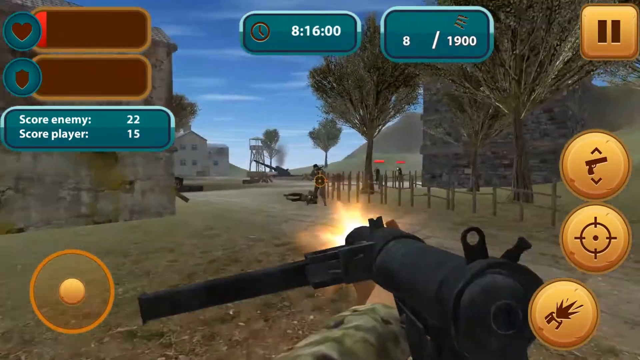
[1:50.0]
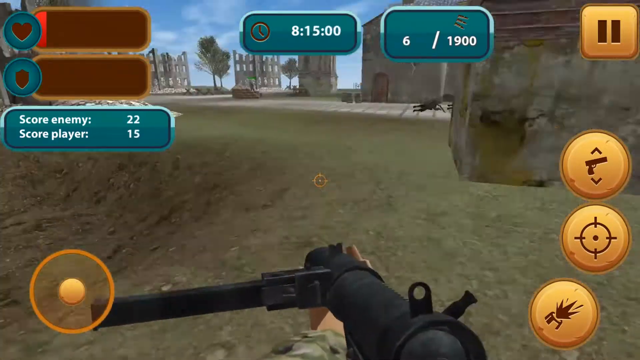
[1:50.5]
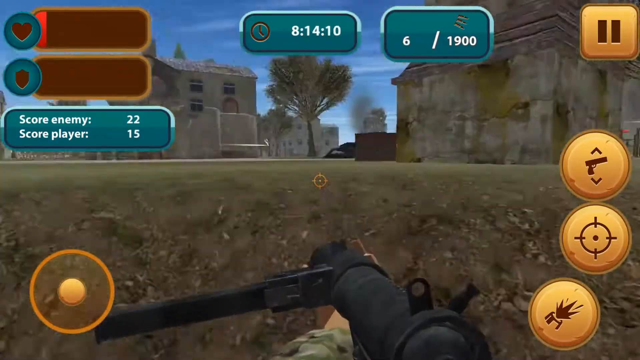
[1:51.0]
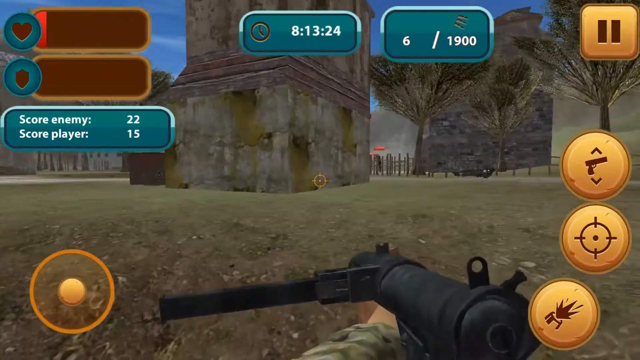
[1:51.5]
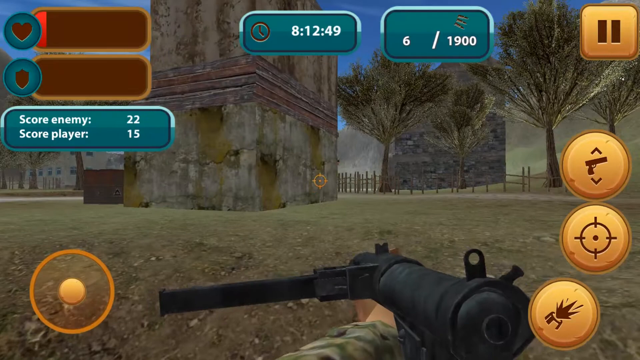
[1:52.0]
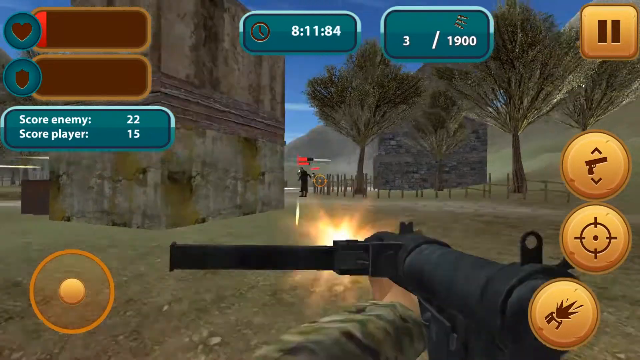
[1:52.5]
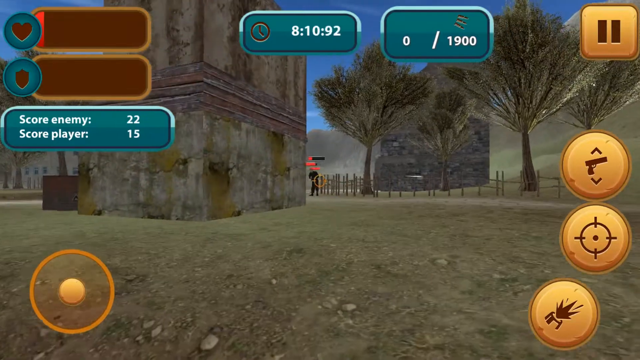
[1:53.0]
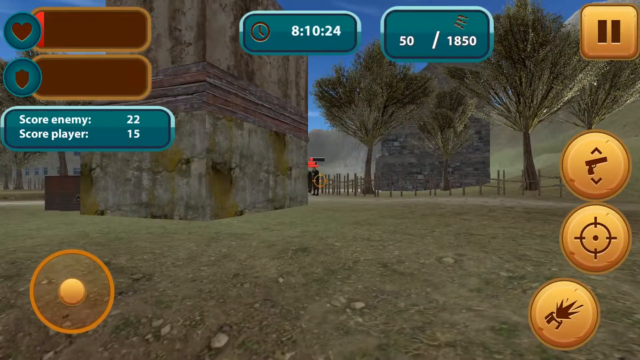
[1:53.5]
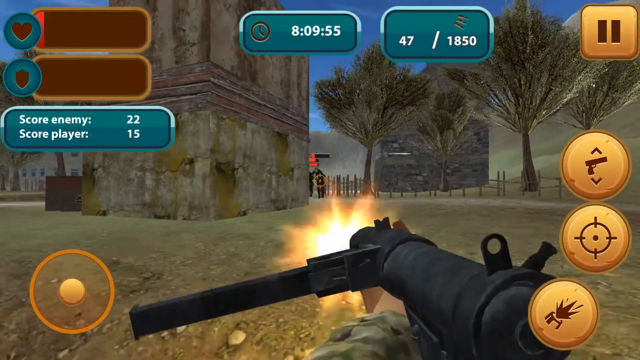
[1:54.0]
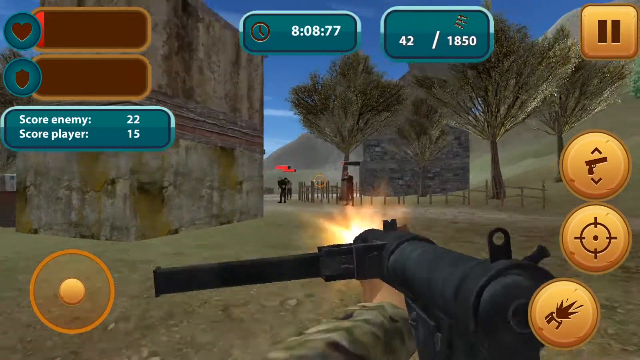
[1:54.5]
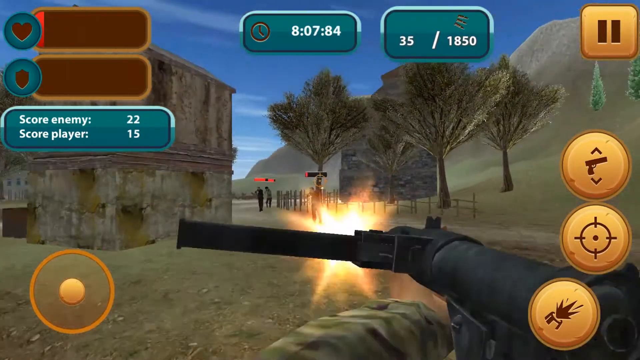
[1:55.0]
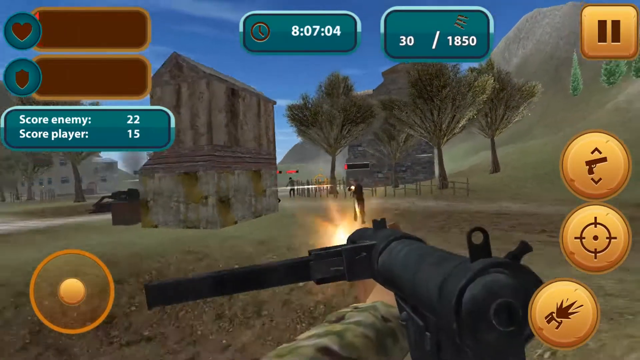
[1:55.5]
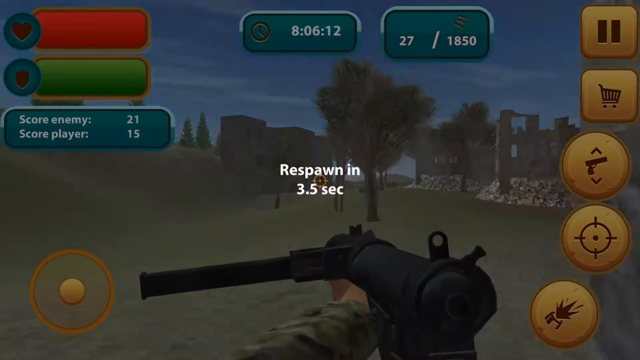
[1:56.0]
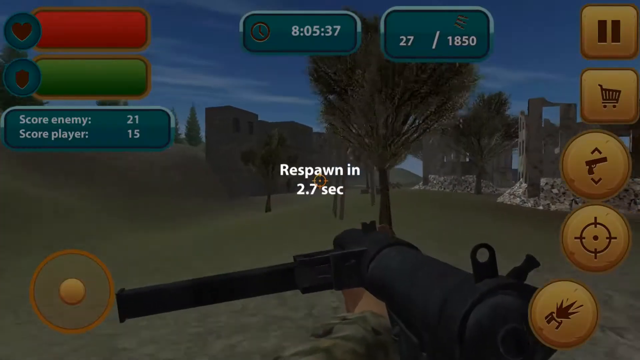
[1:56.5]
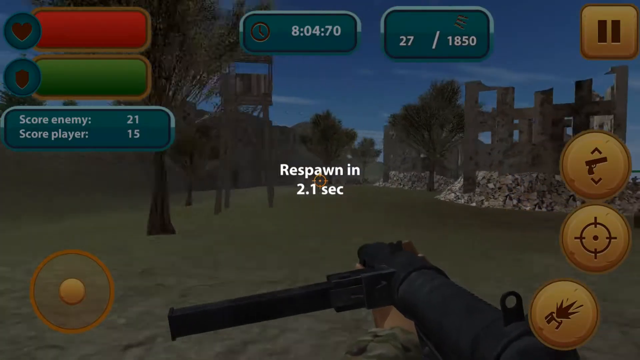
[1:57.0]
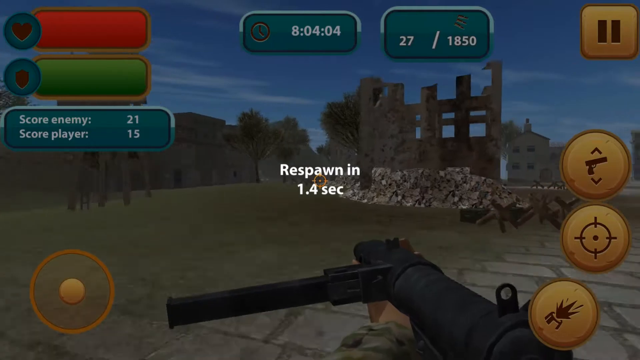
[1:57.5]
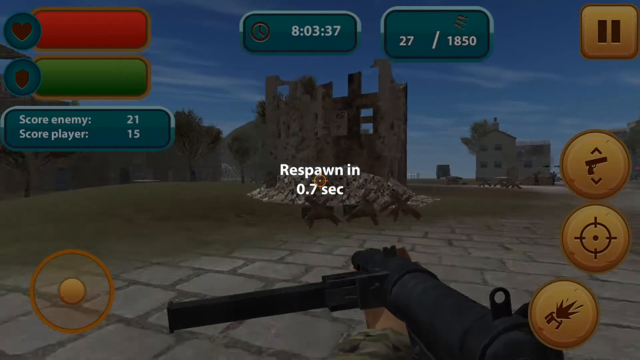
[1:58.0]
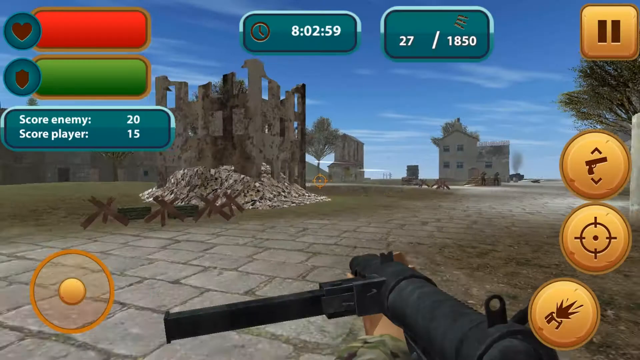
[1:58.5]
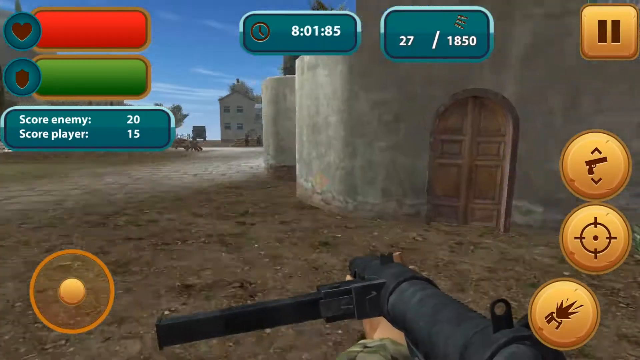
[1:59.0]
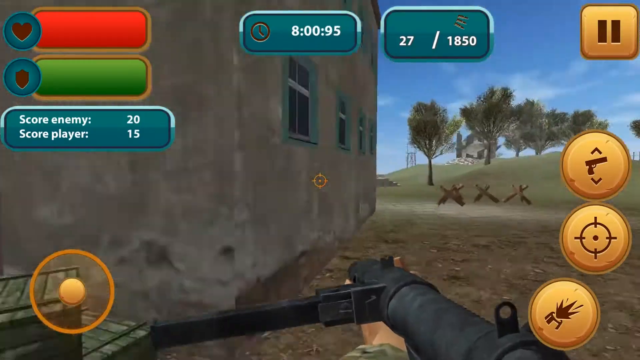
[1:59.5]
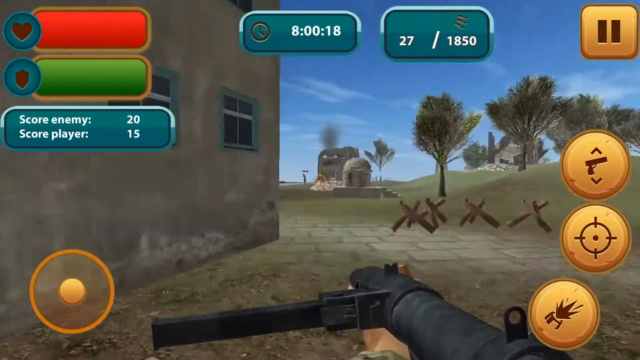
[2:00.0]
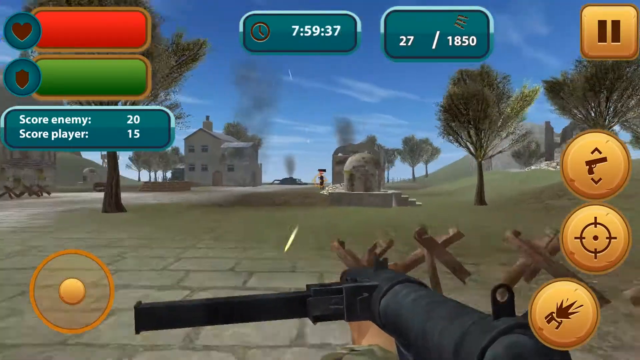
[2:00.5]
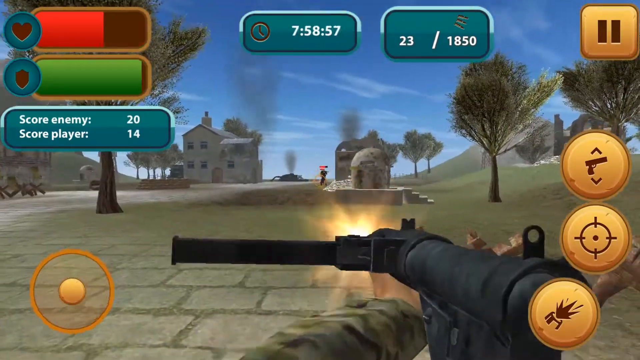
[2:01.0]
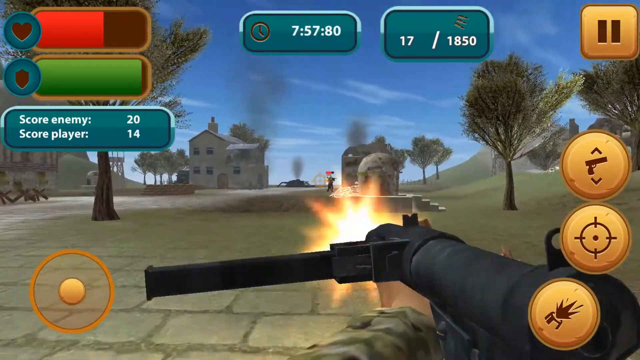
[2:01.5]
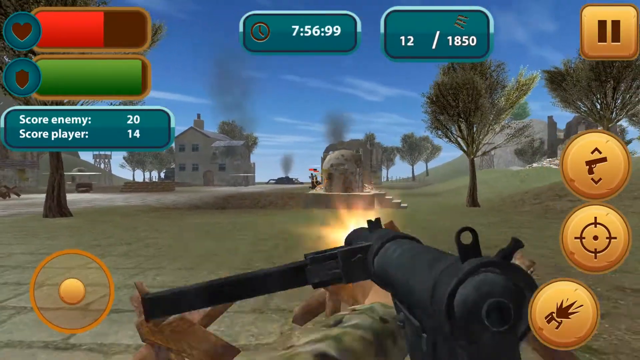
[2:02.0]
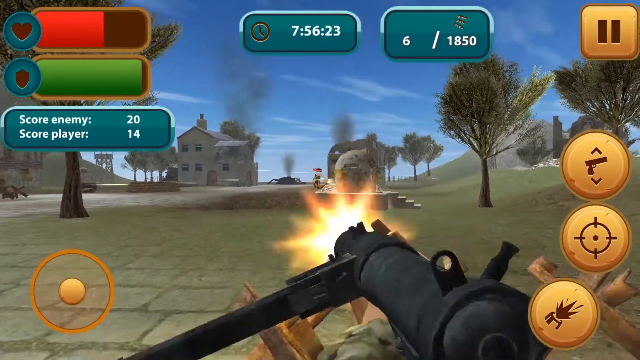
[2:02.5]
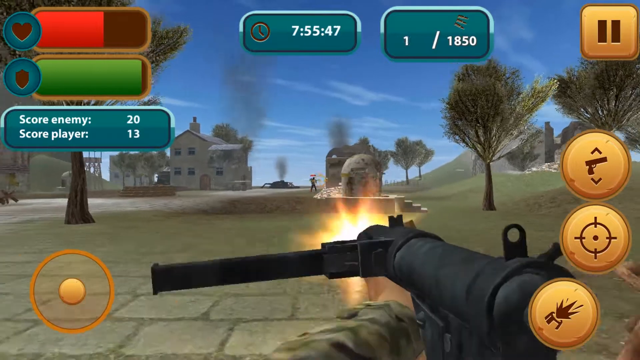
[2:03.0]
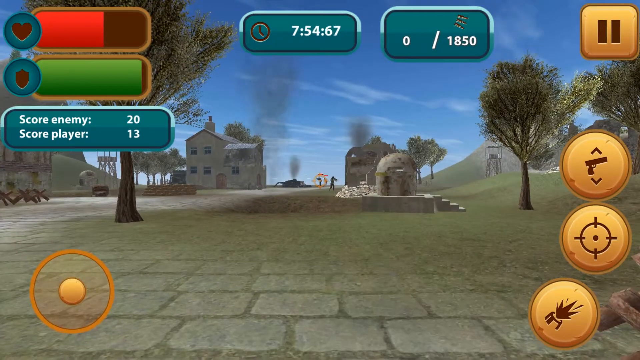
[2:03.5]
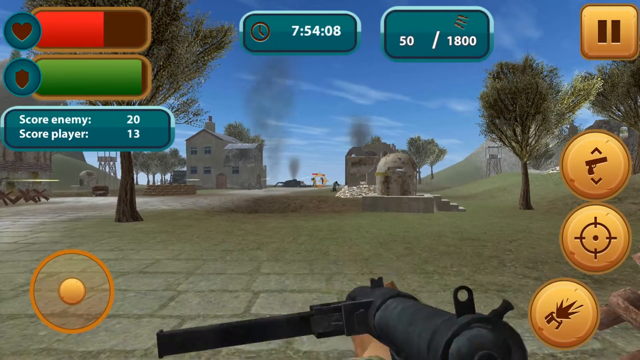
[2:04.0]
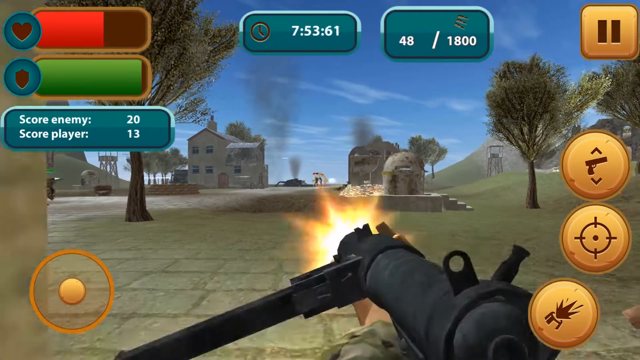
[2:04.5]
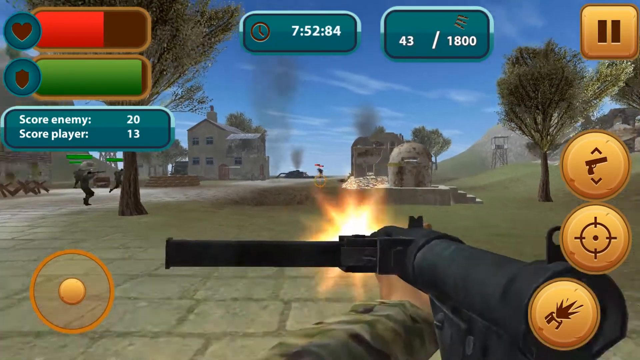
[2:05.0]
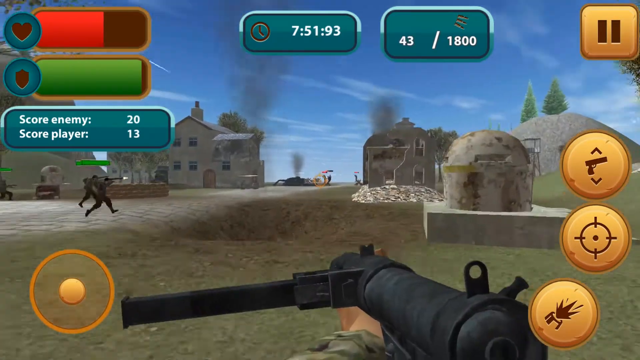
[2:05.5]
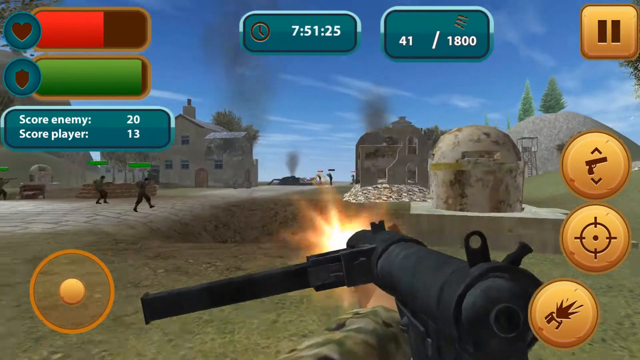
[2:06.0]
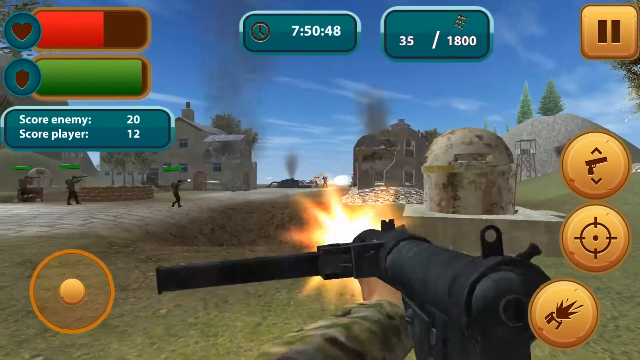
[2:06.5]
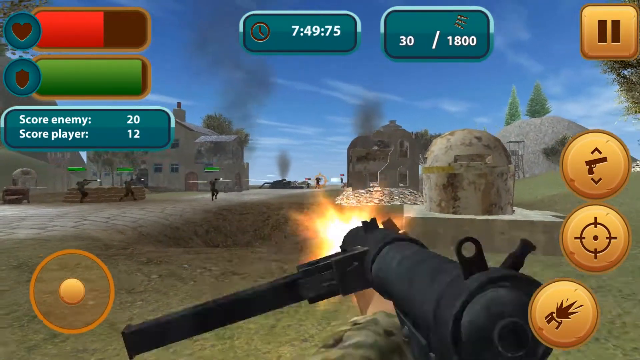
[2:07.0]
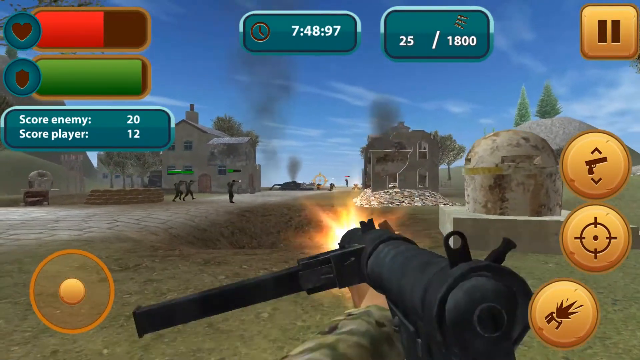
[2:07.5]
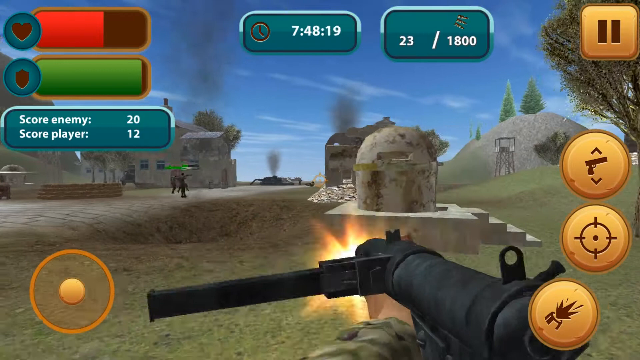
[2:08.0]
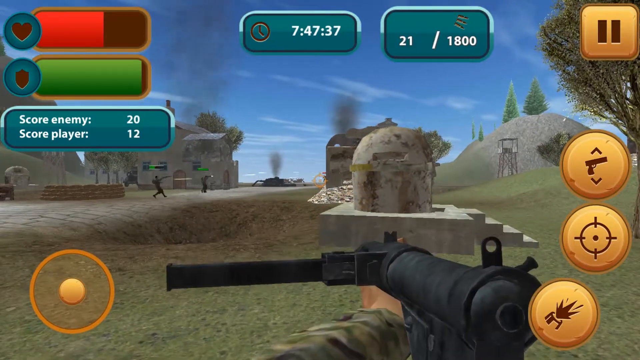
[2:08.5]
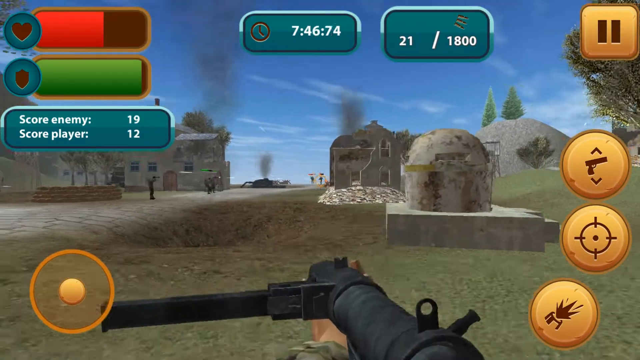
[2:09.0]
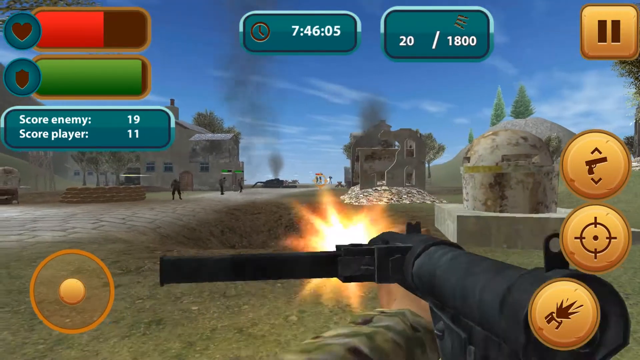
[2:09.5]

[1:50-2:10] The protagonist appears to charge towards the enemy once again, nearly dead, and then dies. He passes what looks like a sort of bunker made of steel, and many broken-down buildings along a path. There is not much outside this small town, which seems very desolate; it almost looks like a mining town or some sort of village. The time limit appears much greater than before, and the ammo, usually infinite, now shows a limited but very large amount. There is a sort of fence around, made with logs in between.